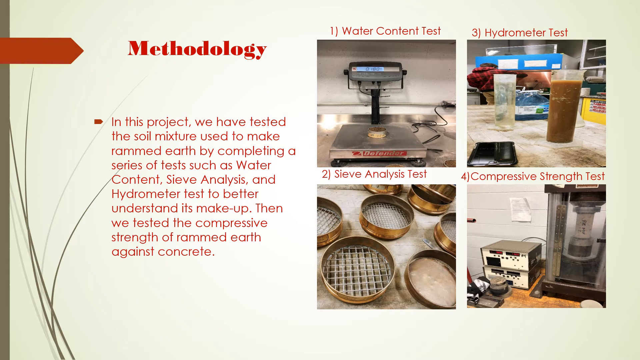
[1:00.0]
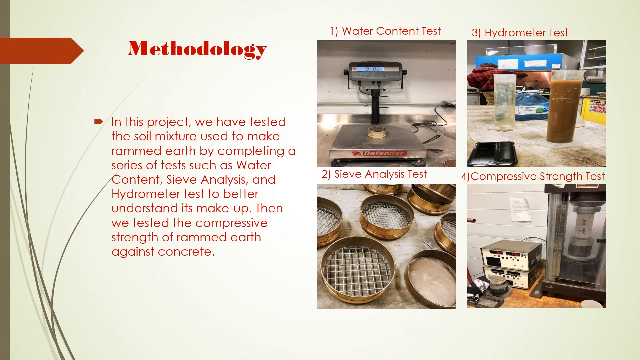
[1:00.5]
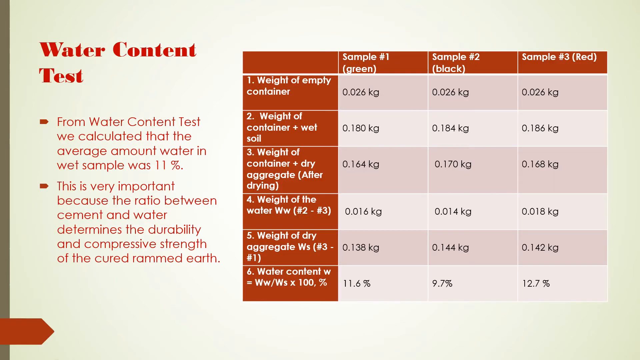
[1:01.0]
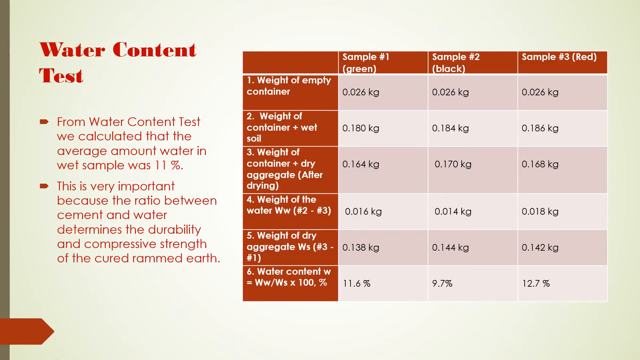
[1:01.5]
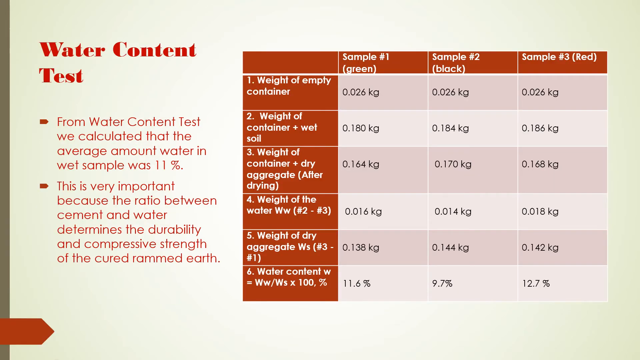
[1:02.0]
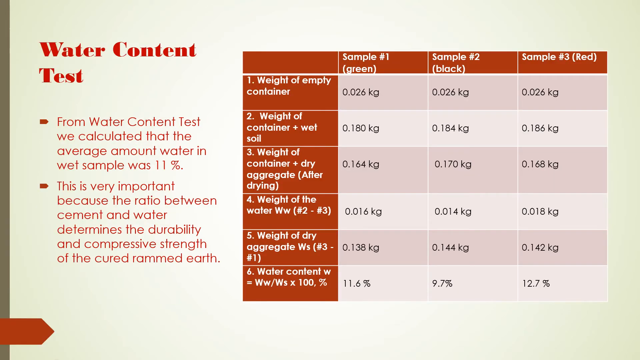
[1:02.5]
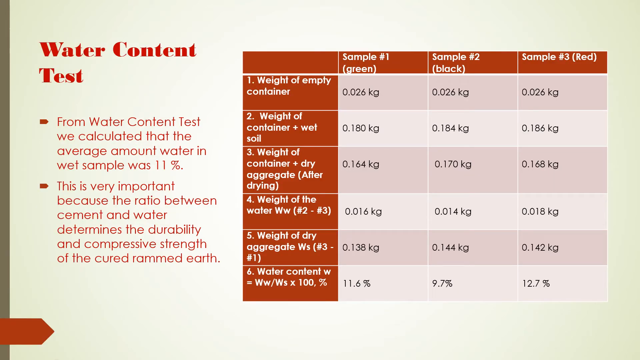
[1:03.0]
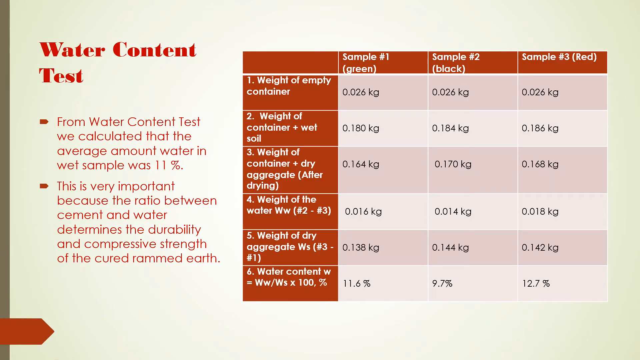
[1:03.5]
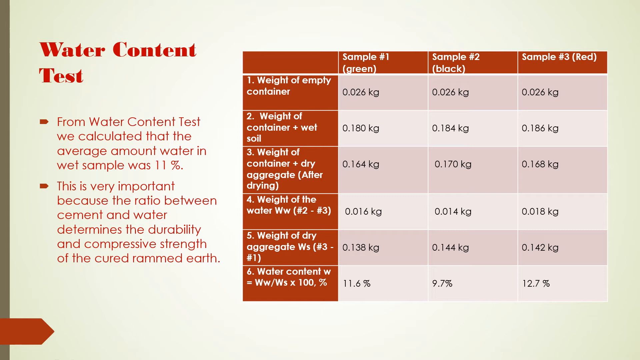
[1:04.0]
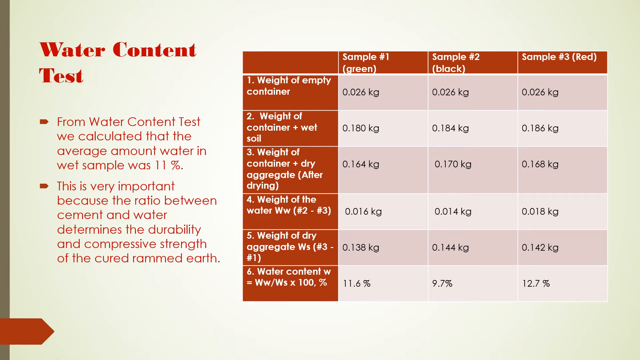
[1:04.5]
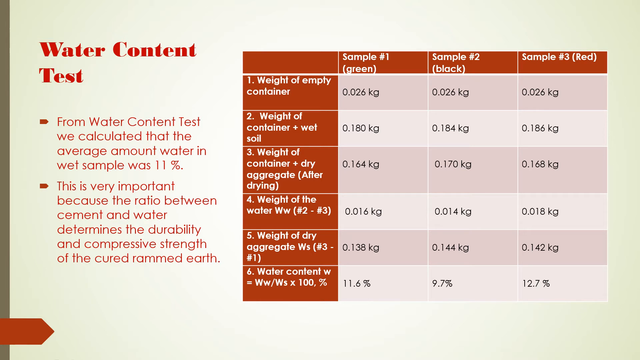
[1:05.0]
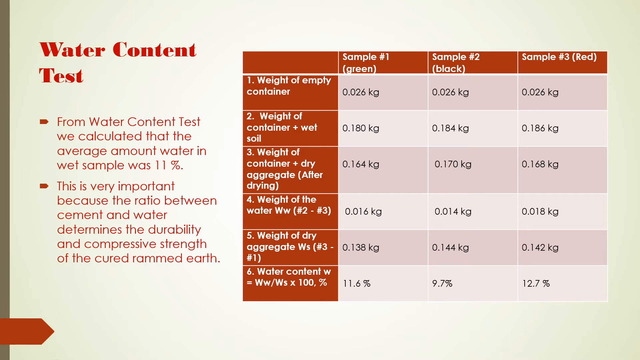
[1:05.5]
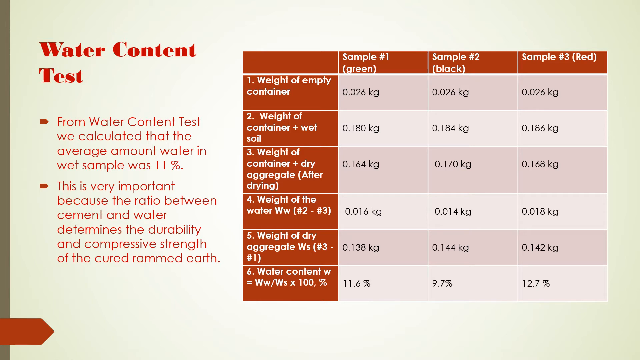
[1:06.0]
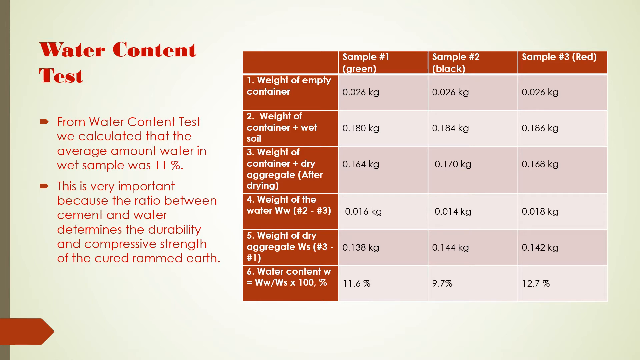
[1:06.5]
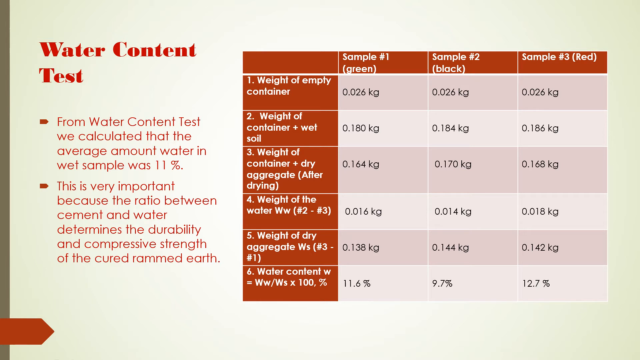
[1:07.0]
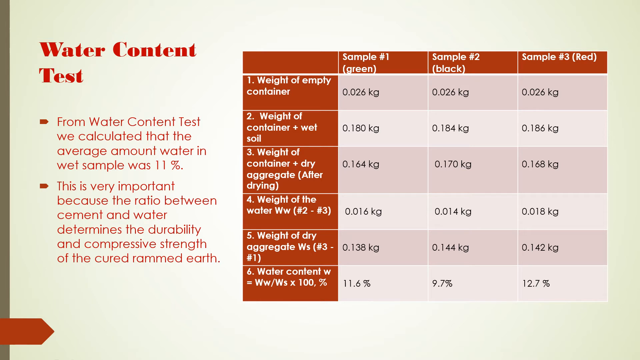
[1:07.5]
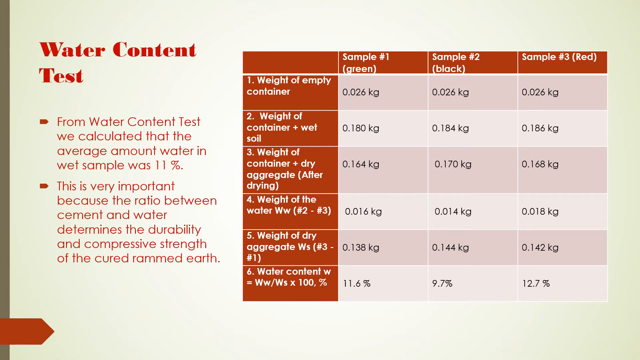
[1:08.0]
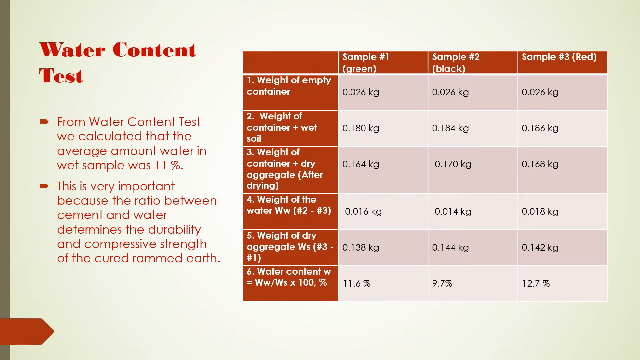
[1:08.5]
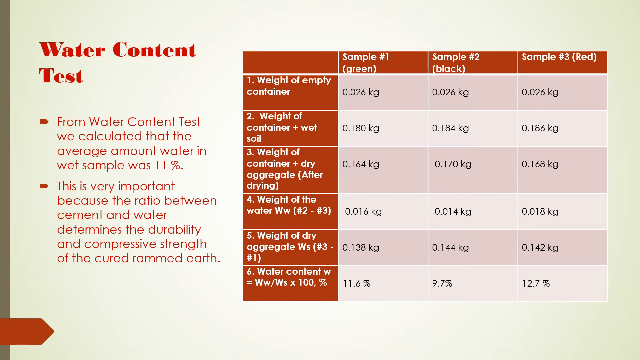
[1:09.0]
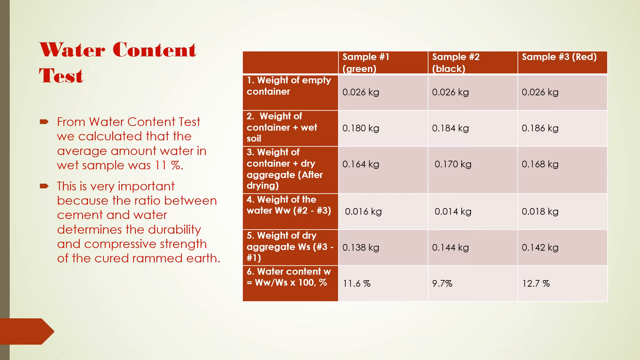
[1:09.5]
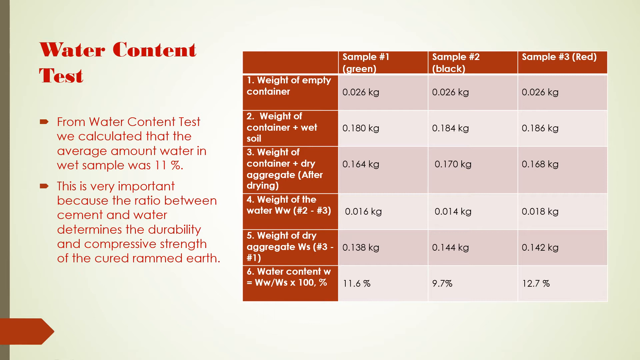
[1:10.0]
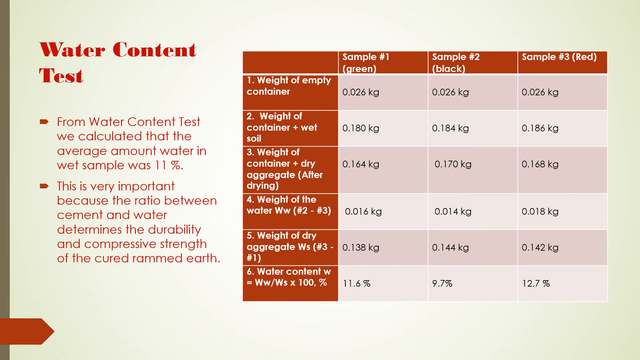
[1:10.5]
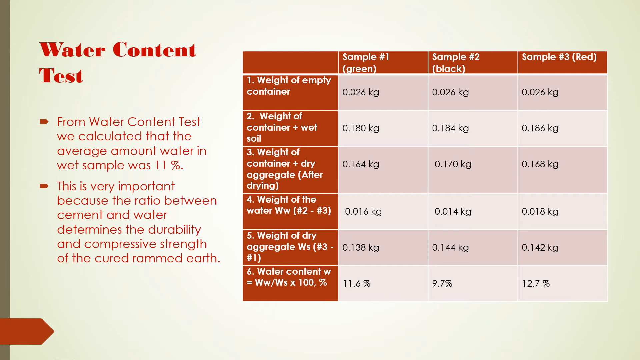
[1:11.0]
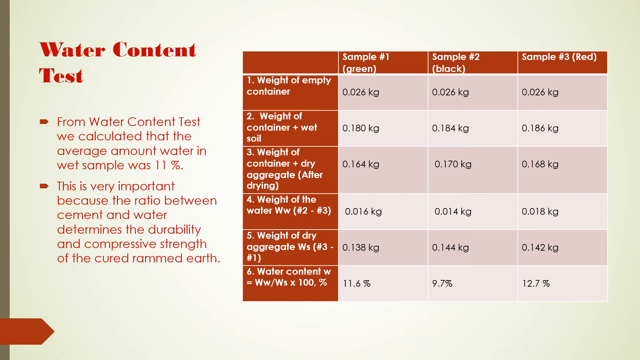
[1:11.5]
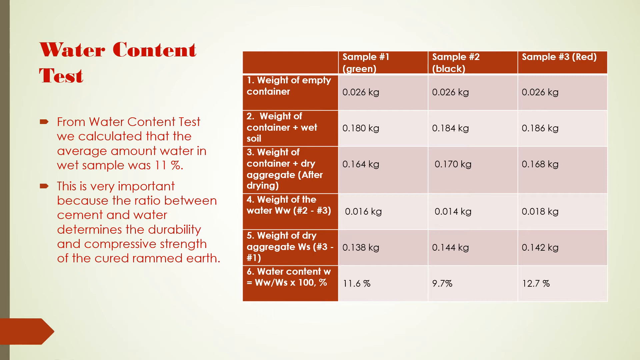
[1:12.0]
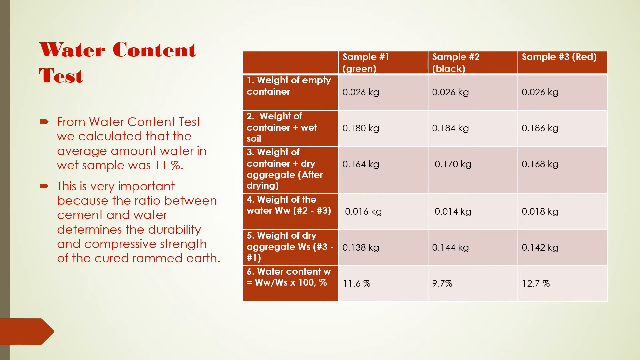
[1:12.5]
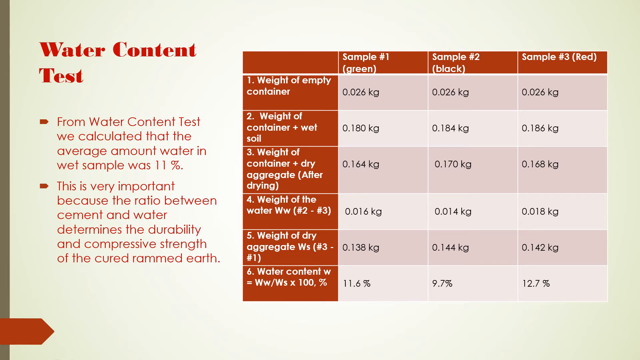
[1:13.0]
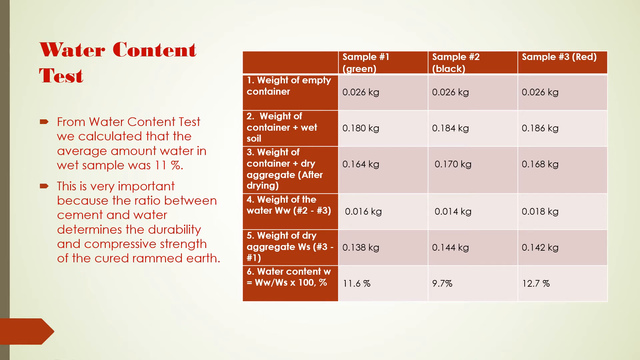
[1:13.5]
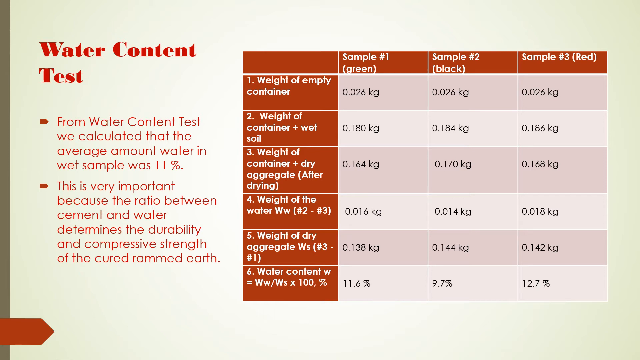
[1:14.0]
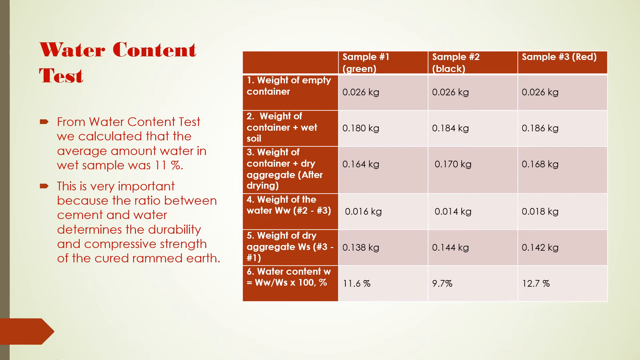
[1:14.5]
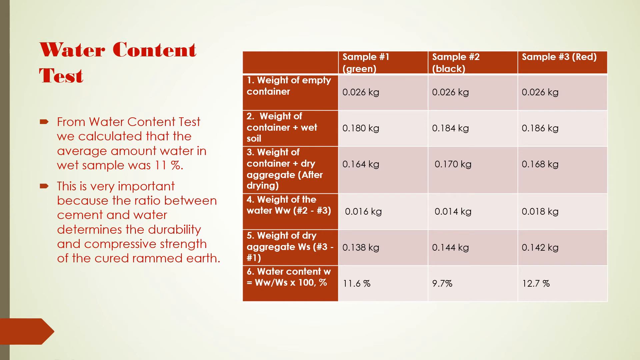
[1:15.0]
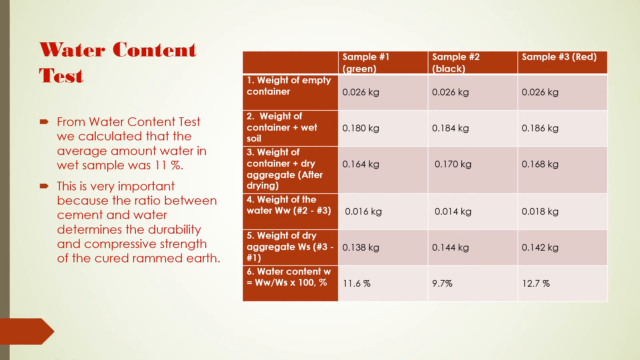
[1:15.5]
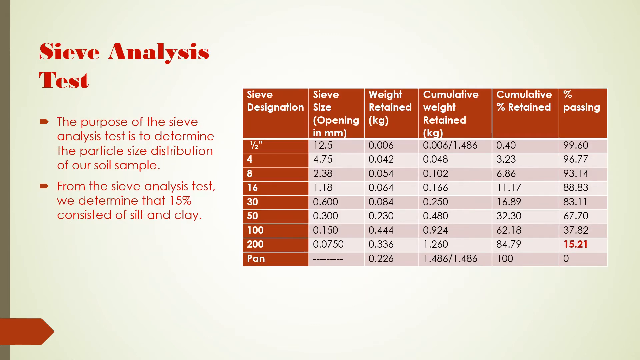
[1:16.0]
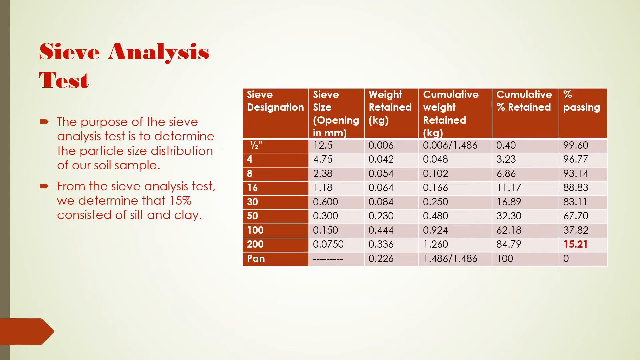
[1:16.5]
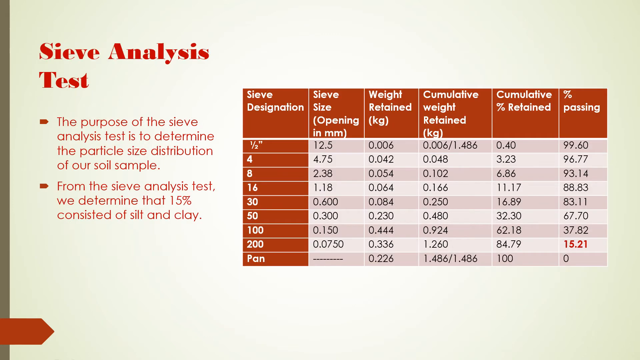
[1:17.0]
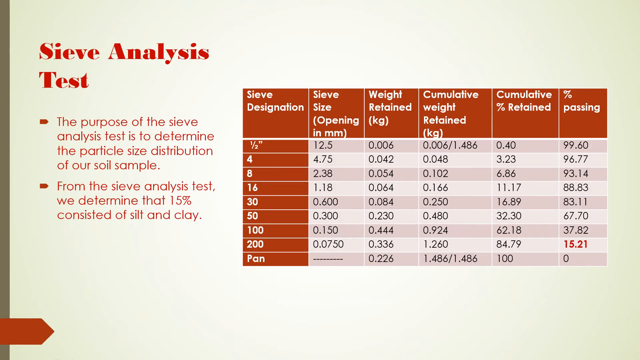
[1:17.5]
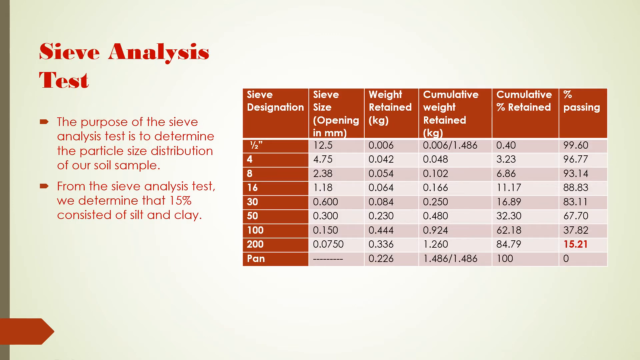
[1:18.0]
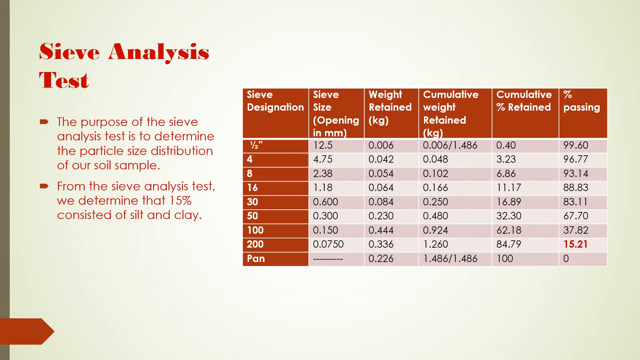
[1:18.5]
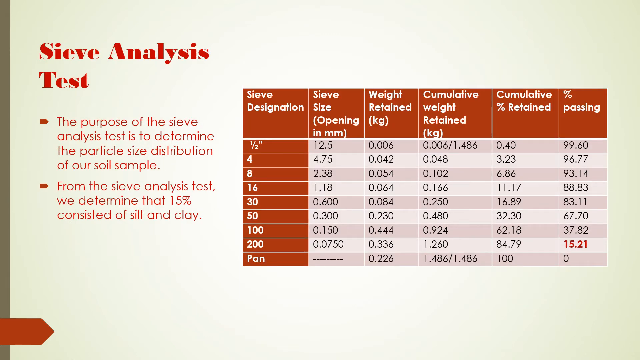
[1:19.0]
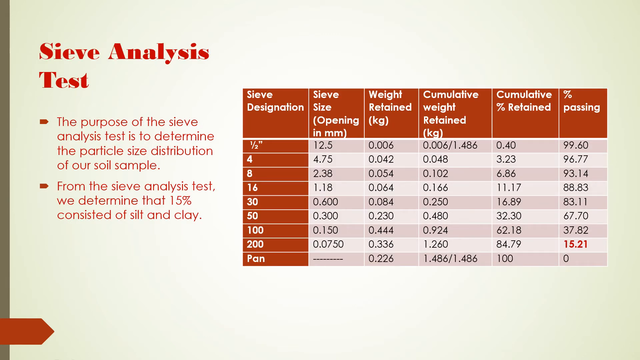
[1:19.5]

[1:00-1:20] The methodology slide is on screen before the video changes to a page titled "water content test." On the left are two bullet points: "from water content test we calculated that the average amount of water in wet sample was 11%" and "this is very important because the ratio between cement and water determines the durability and compressive strength of the cured rammed earth." On the right is a table with four columns going down and six going horizontally. Across the top are "sample 1 green," "sample 2 black," and "sample 3 red." Down the left side are "weight of empty container," "weight of container plus wet soil," "weight of container plus dry aggregate (after drying)," "weight of the water ww (#2 to #3)," "weight of dry aggregate ws (#3 to #1)," and a water content row with "ww / ws times 100" as a percent.